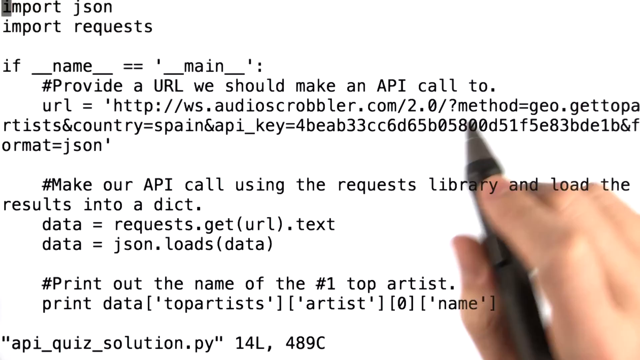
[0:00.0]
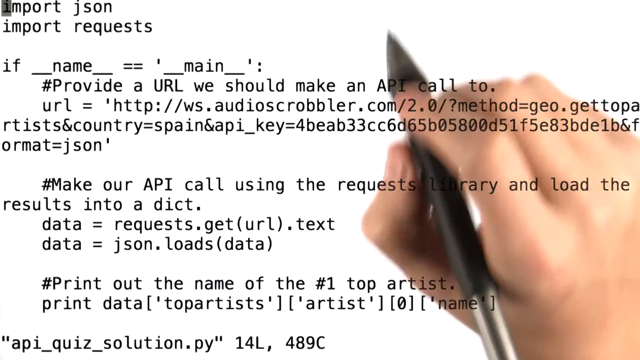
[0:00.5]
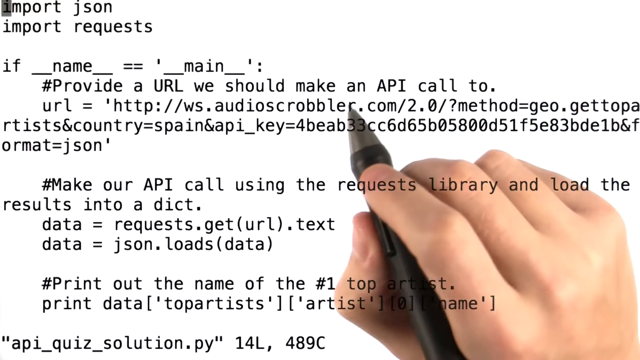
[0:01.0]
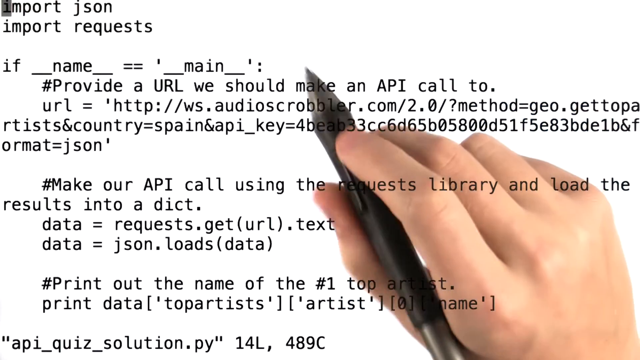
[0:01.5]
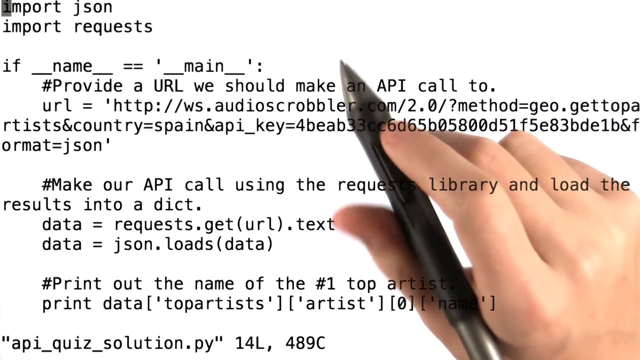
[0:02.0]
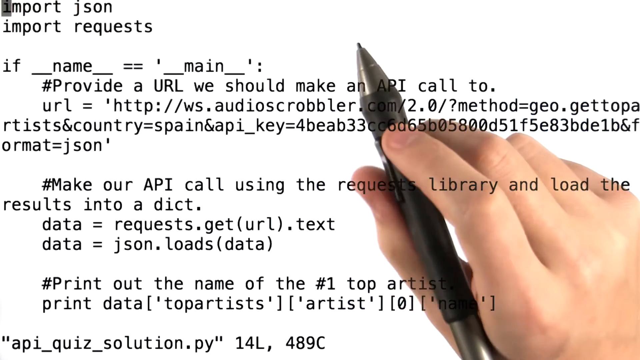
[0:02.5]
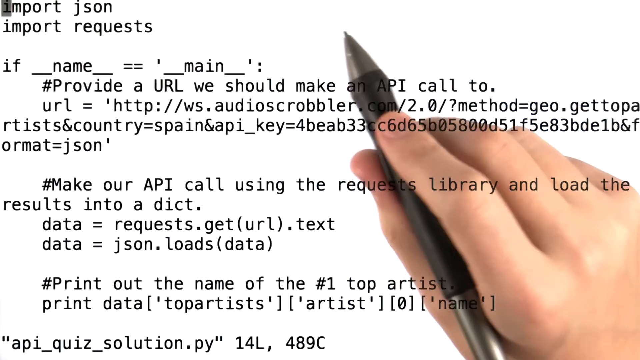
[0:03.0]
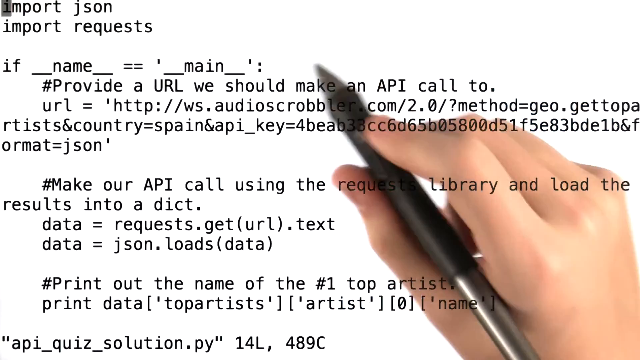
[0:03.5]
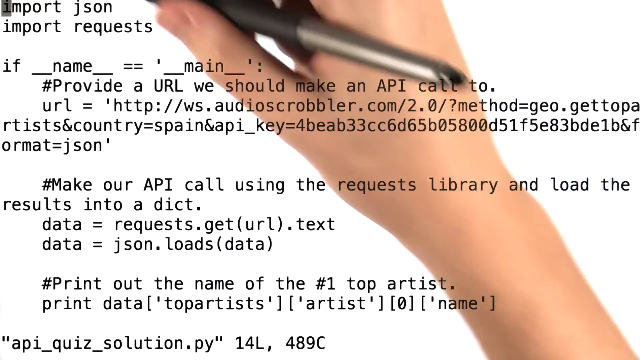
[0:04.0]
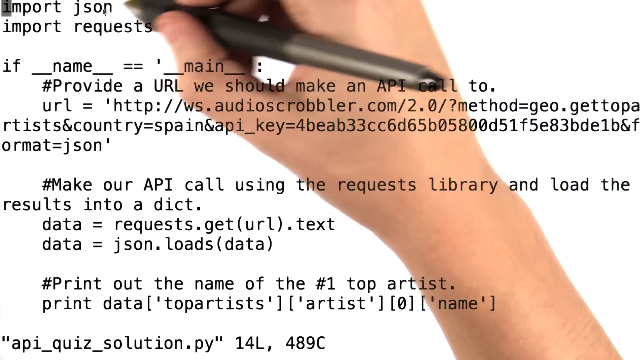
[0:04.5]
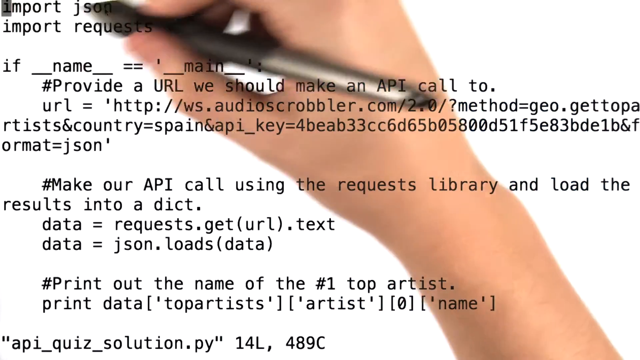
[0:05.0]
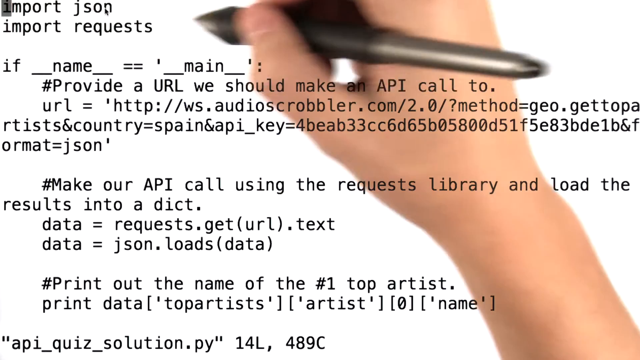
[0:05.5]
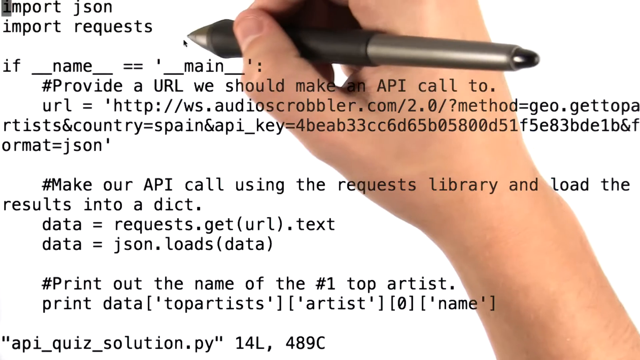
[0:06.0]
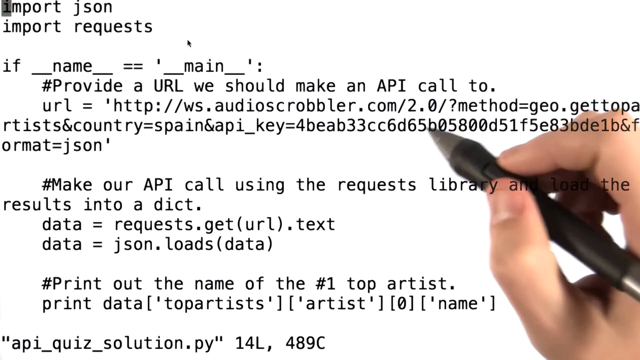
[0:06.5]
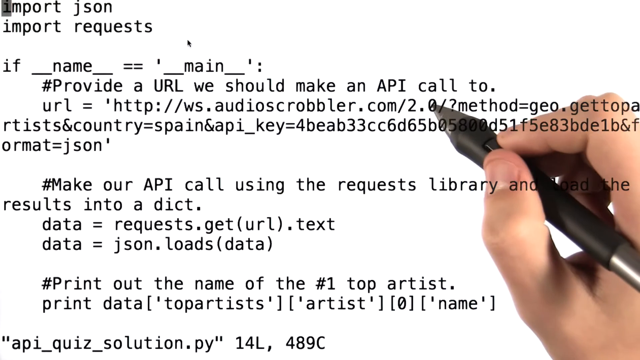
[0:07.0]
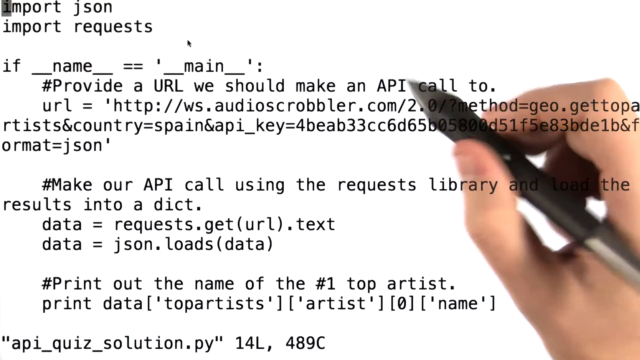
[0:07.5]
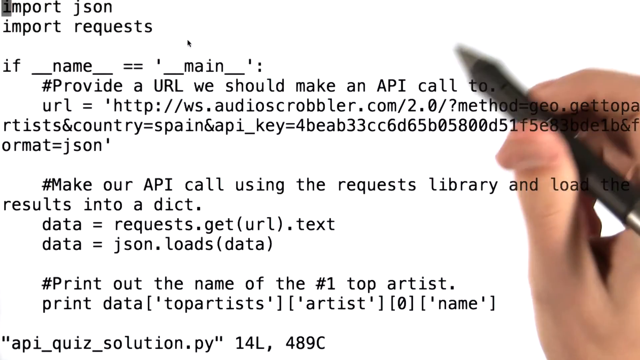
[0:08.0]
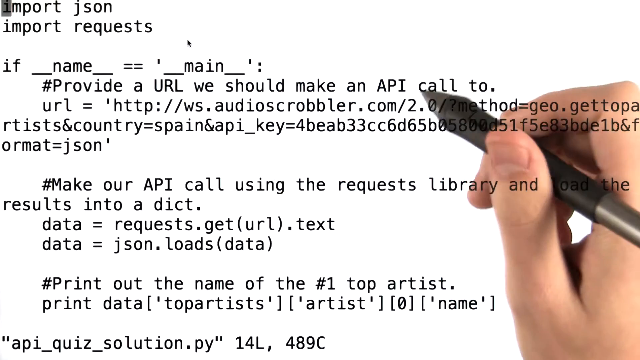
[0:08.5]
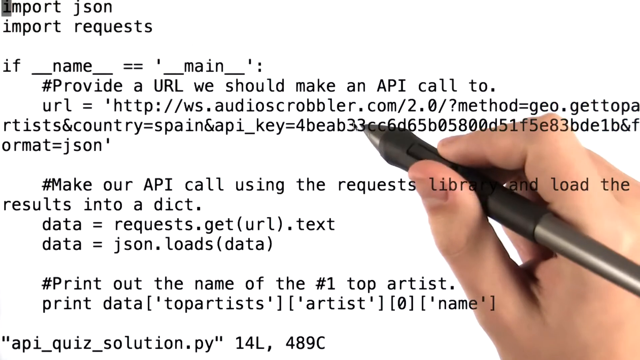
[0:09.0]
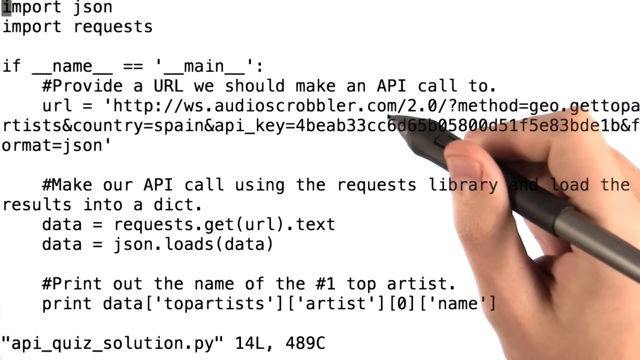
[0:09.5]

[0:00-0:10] A person holding a pen writes on a whiteboard. Code-like text is written out, including words such as "import", "json", "main", "api url", "http", "request" and "load data", along with lines reading "print out the name of each one of the artists" and "print data". The content appears to be about how data is used, possibly relating to artists or to storing music.